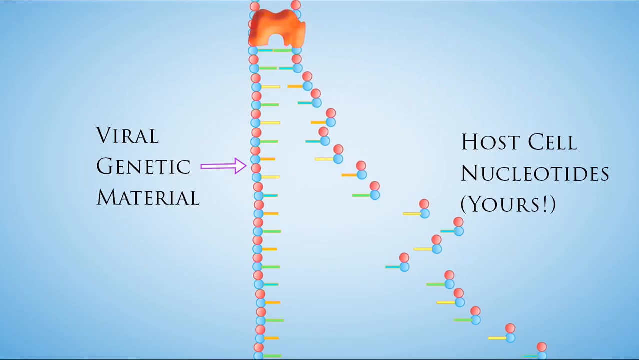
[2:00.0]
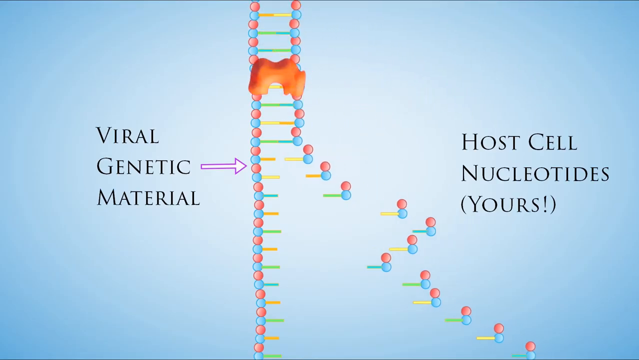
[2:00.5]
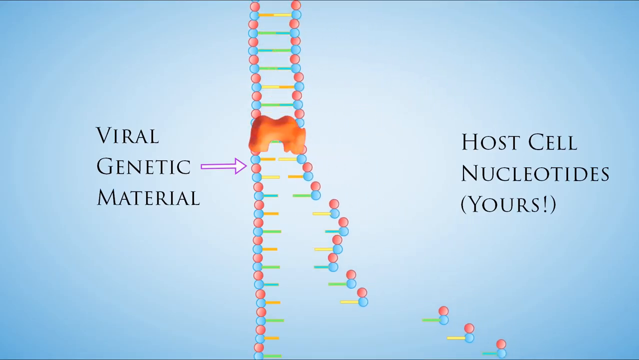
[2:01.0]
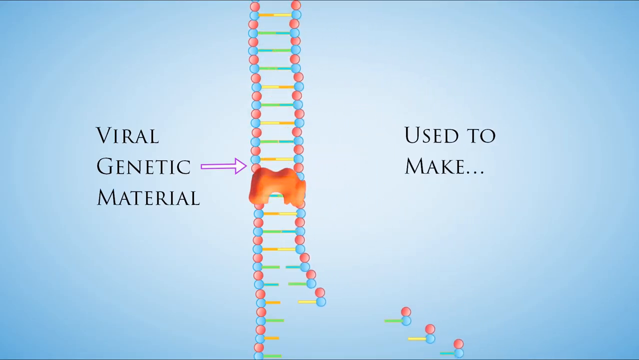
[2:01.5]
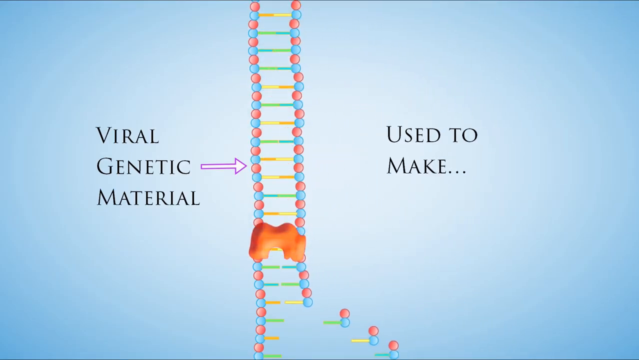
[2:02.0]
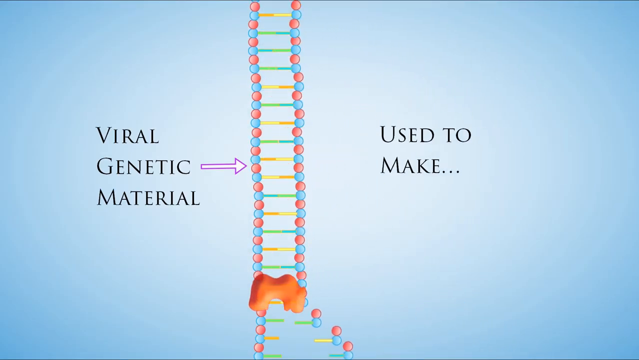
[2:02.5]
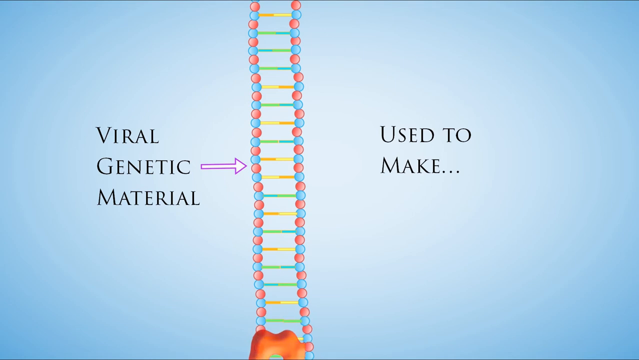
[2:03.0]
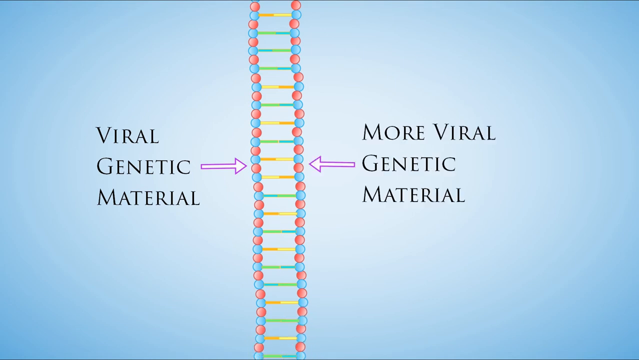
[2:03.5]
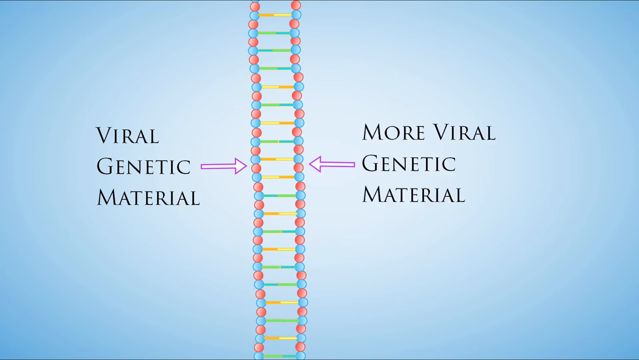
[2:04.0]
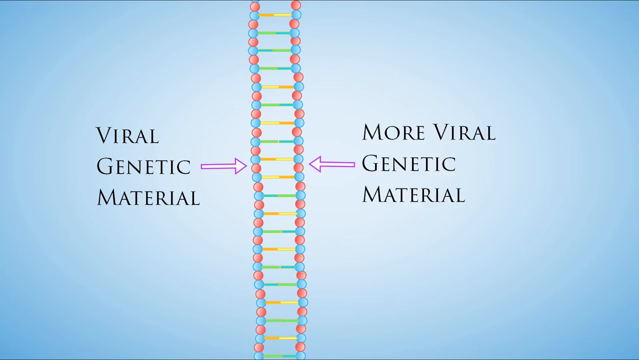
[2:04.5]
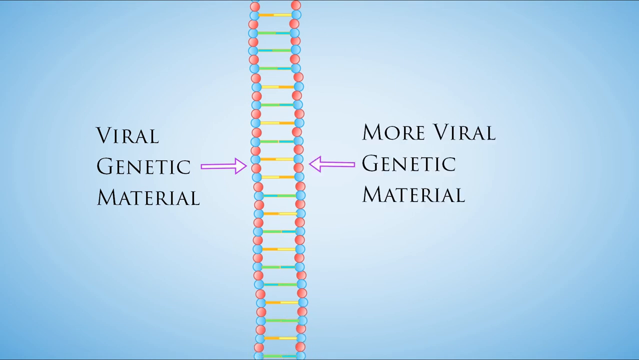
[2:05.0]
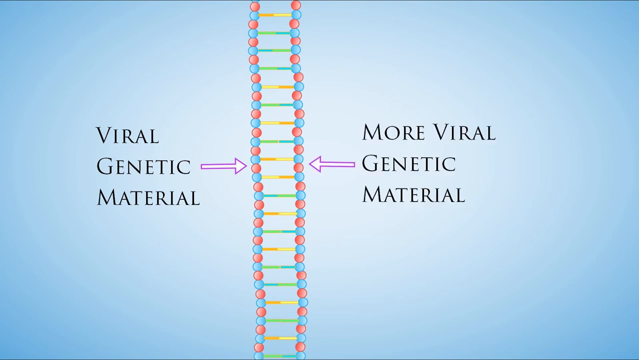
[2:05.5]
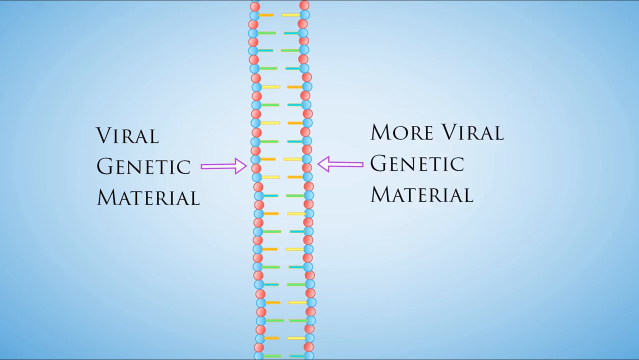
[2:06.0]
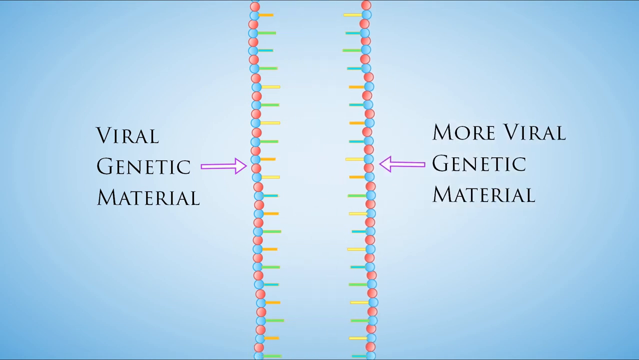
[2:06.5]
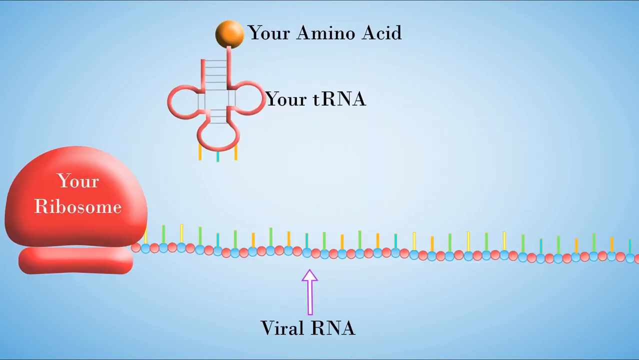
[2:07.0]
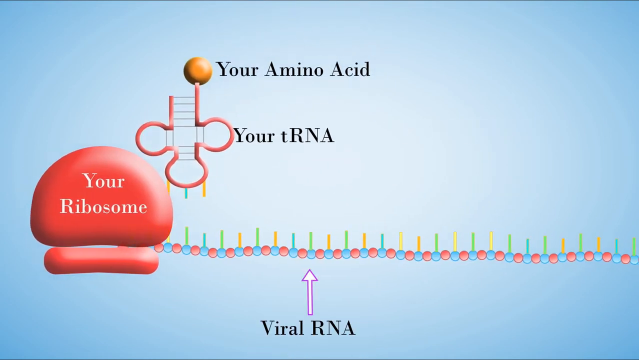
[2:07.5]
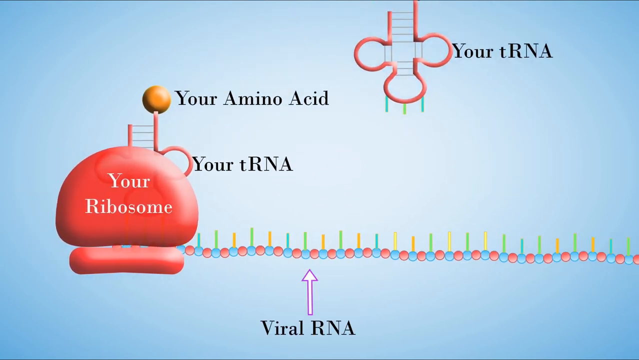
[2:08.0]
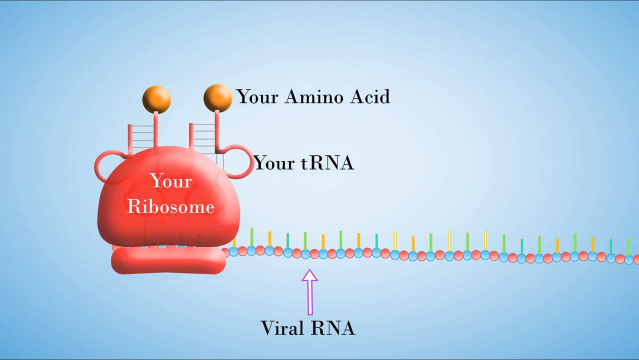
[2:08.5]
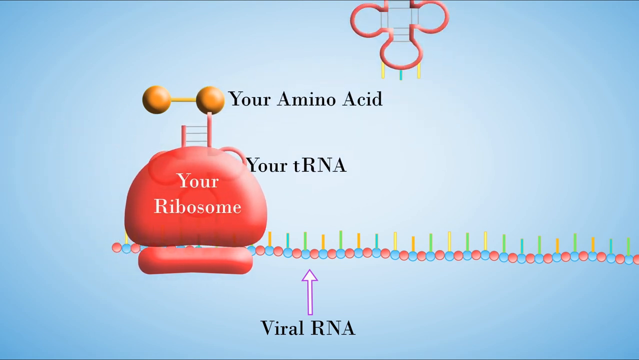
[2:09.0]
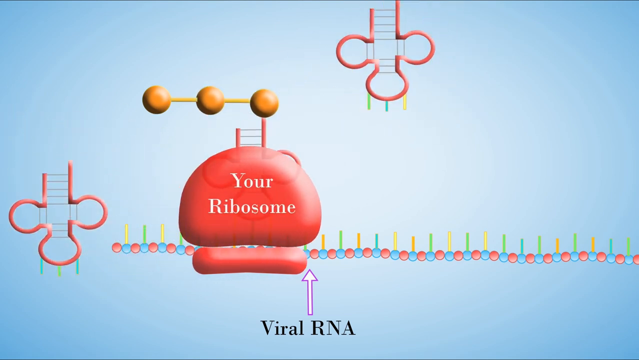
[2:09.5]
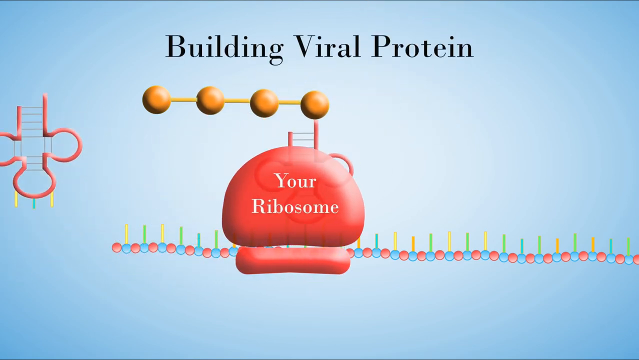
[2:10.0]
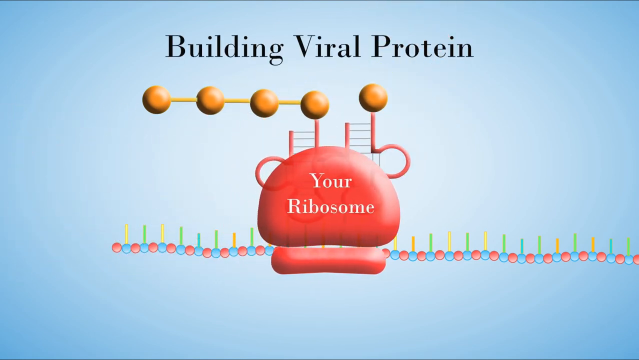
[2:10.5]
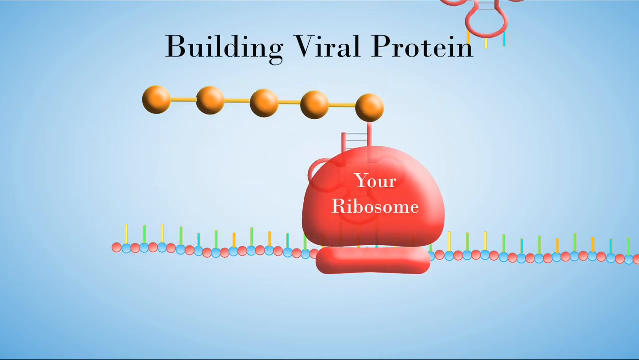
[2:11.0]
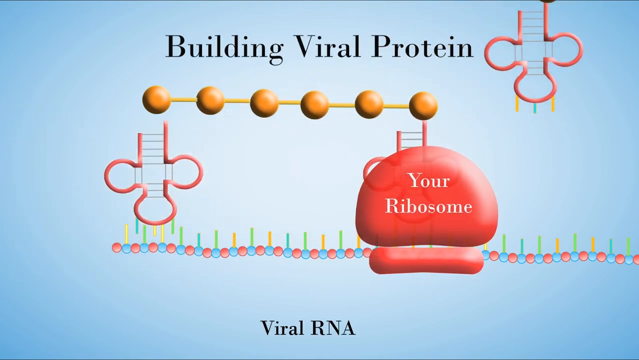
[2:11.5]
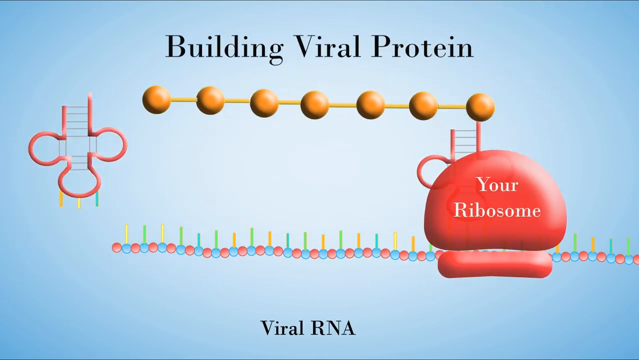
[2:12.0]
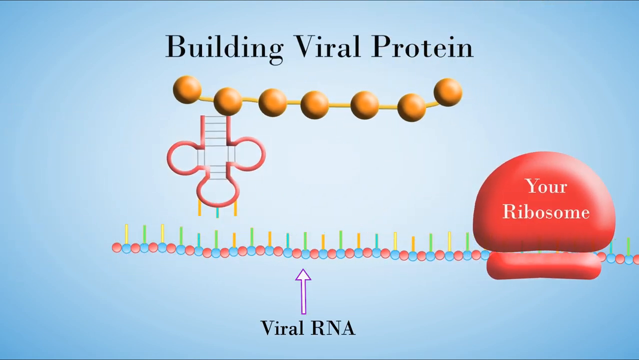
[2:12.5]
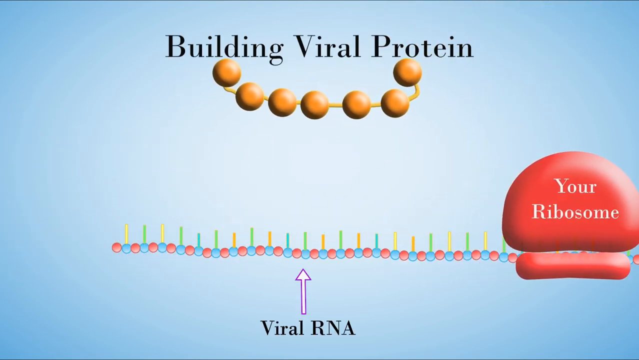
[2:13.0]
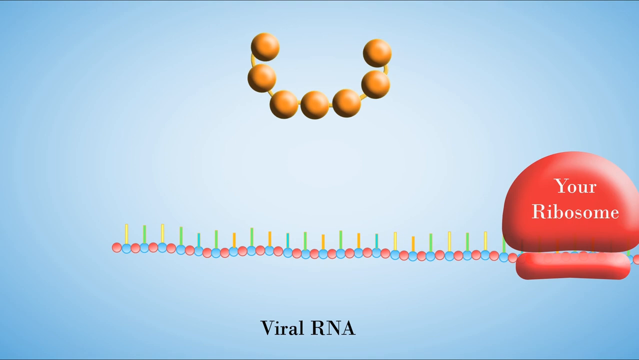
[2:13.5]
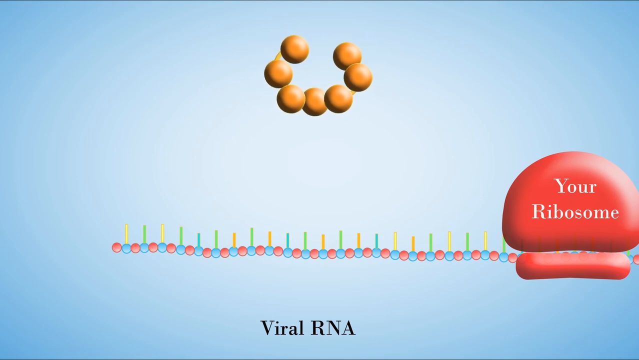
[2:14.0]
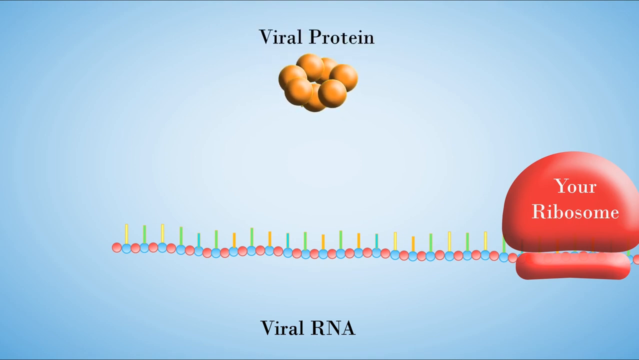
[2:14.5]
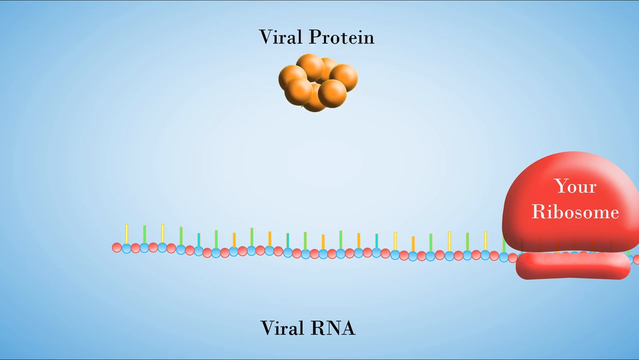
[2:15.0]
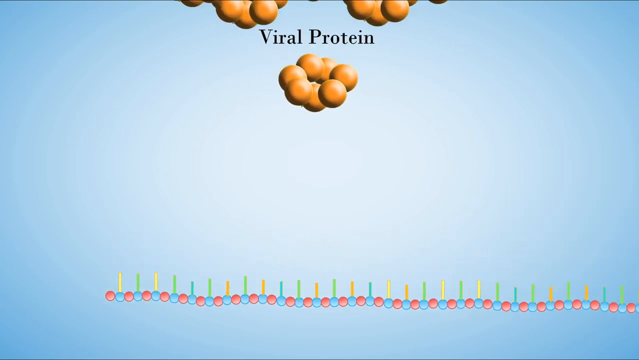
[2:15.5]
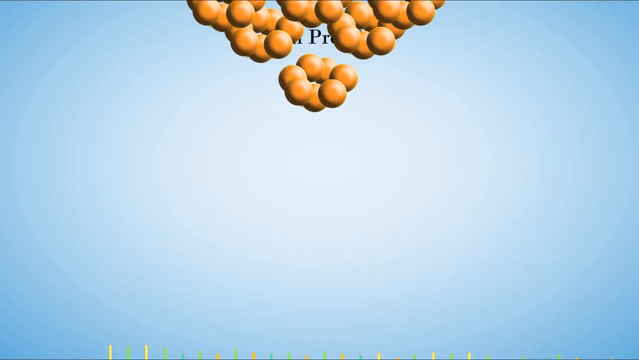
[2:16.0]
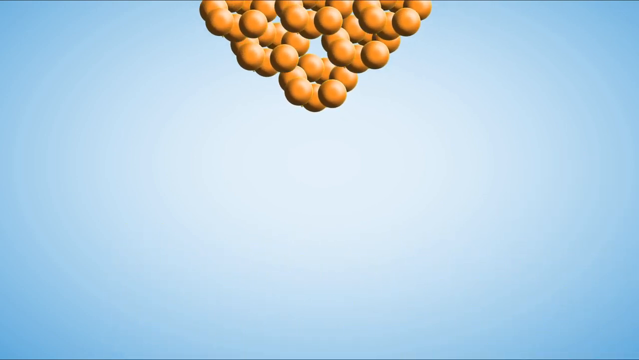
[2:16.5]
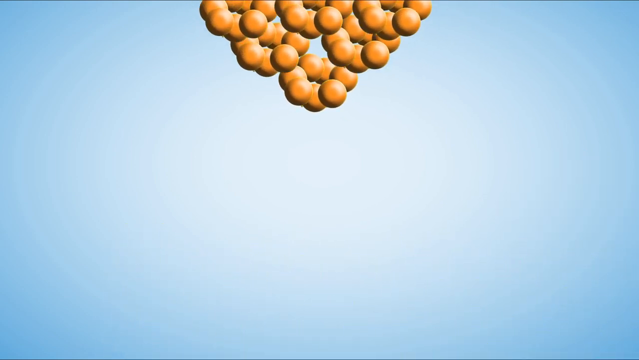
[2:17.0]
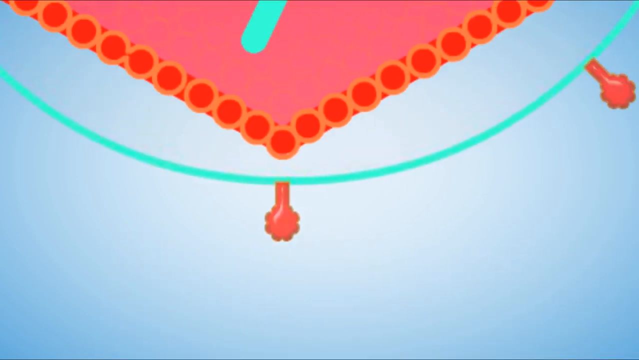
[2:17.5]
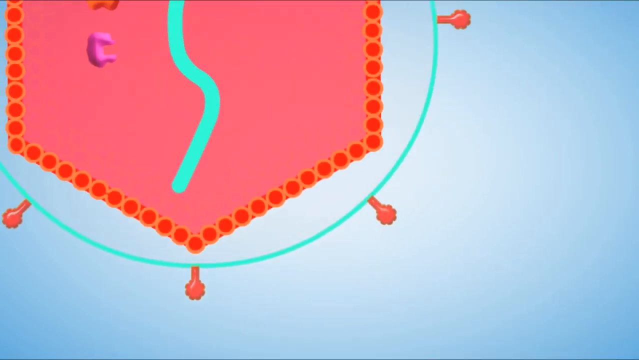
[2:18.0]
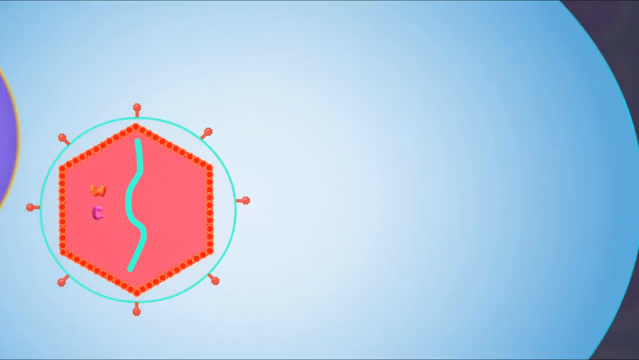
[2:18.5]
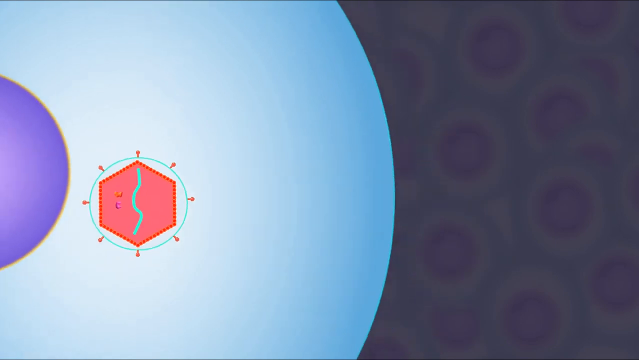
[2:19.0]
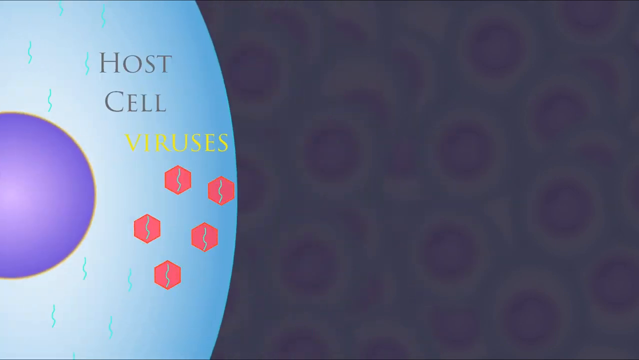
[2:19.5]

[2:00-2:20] Viral genetic material is on the left and the host cell's nucleotides are on the right. More viral genetic material forms between the genetic material on each side. A ribosome, an amino acid and RNA are then shown, apparently depicting how the virus builds and replicates itself. Viral protein attaches into a big clump.